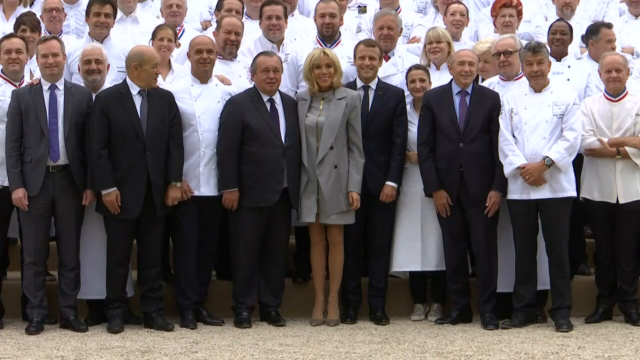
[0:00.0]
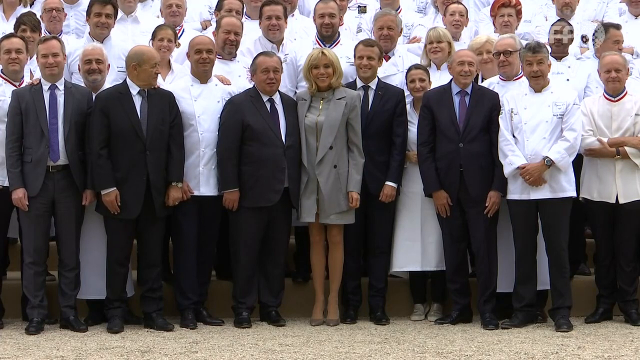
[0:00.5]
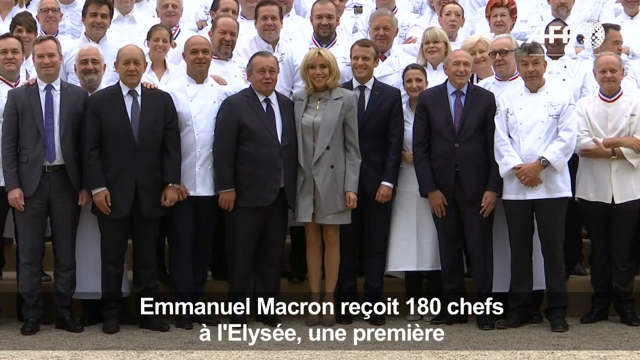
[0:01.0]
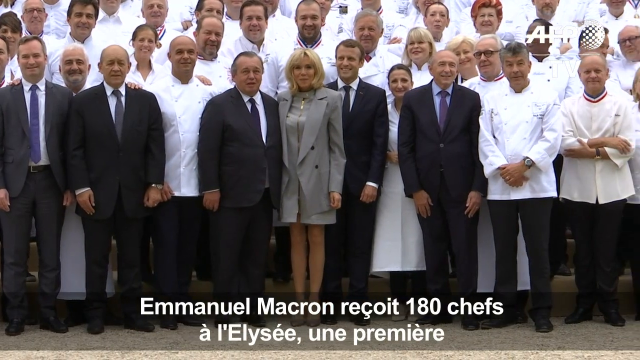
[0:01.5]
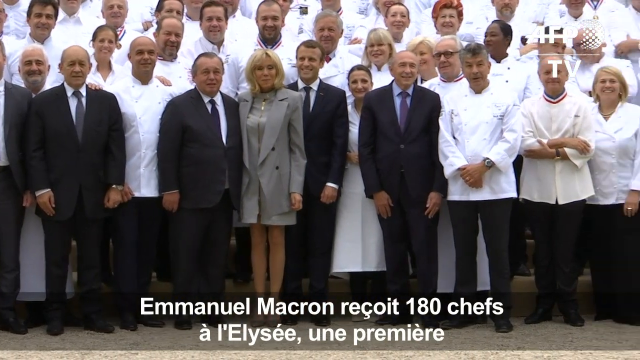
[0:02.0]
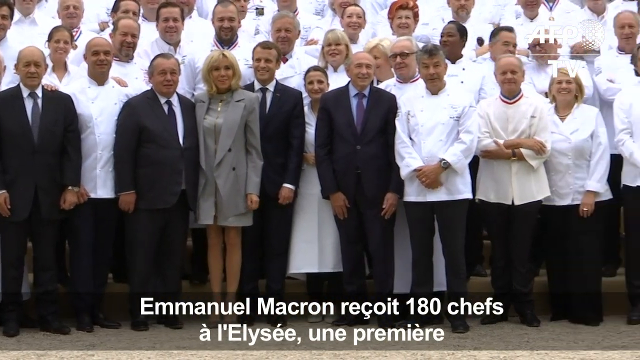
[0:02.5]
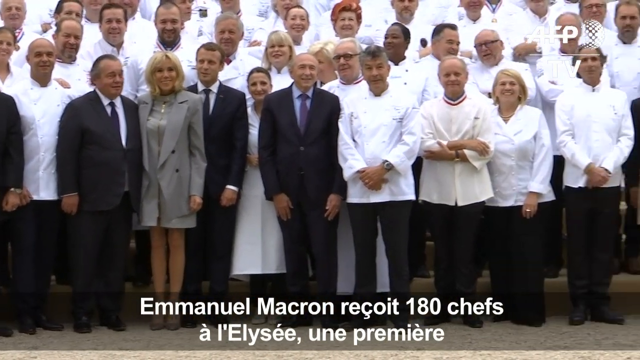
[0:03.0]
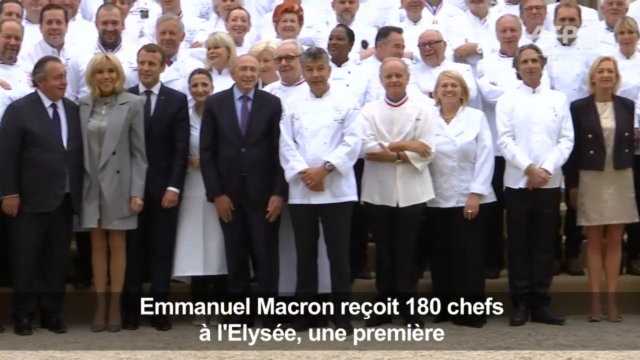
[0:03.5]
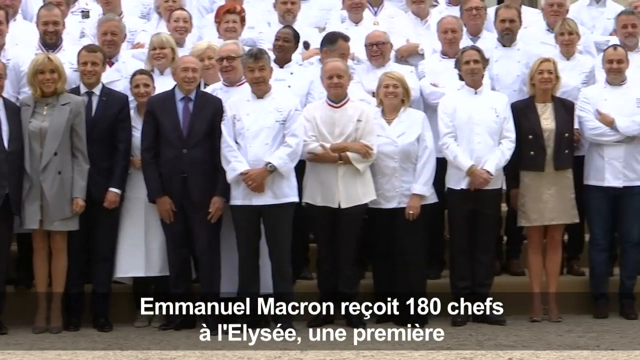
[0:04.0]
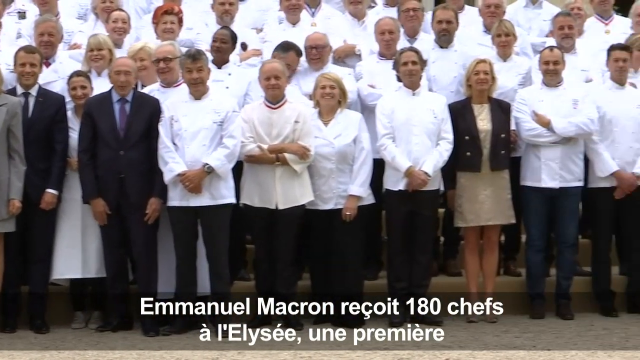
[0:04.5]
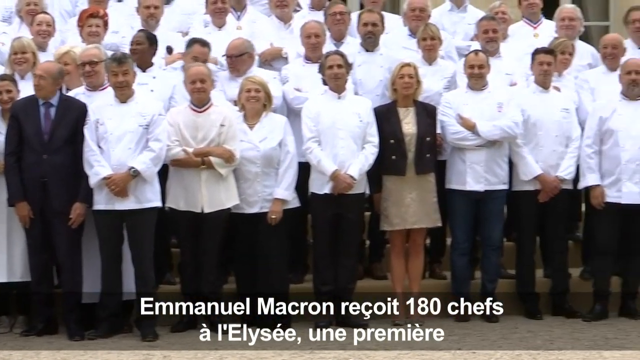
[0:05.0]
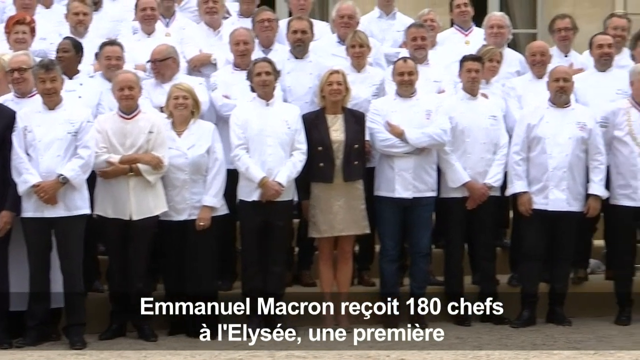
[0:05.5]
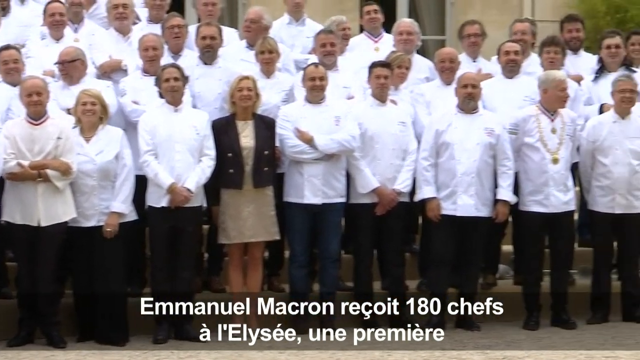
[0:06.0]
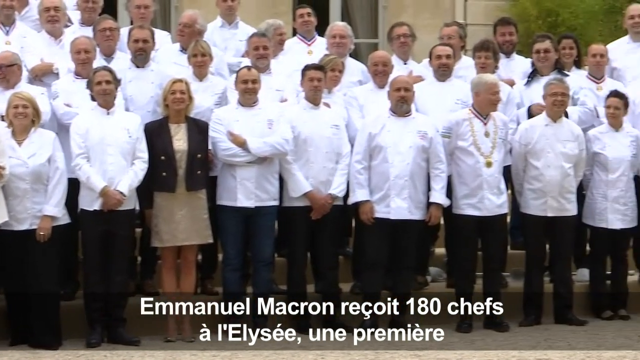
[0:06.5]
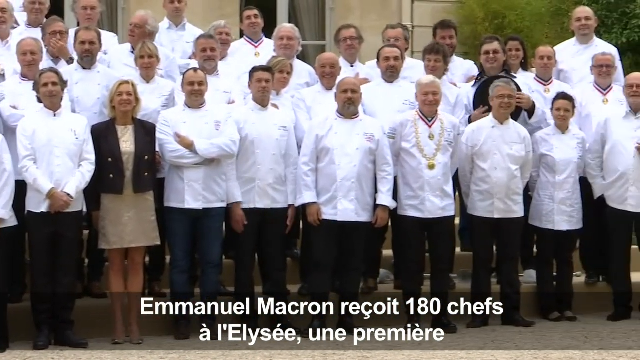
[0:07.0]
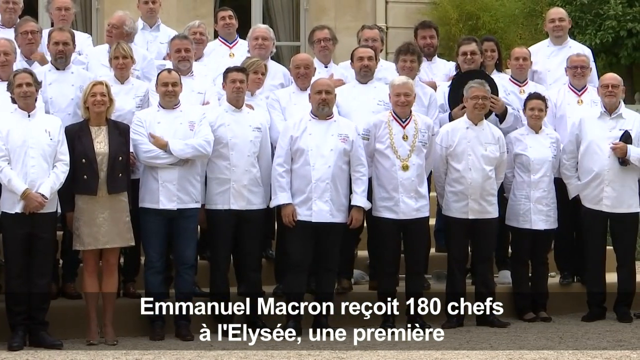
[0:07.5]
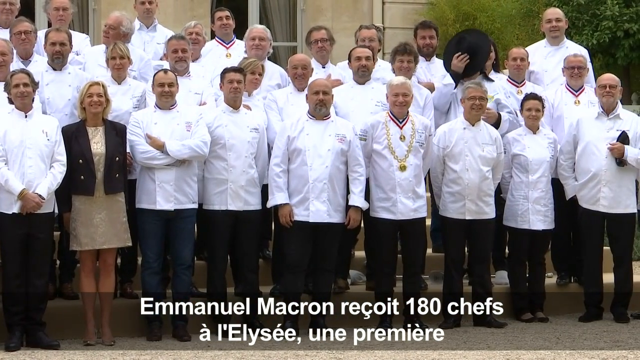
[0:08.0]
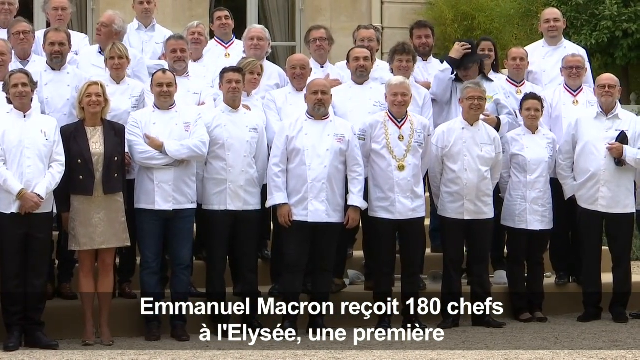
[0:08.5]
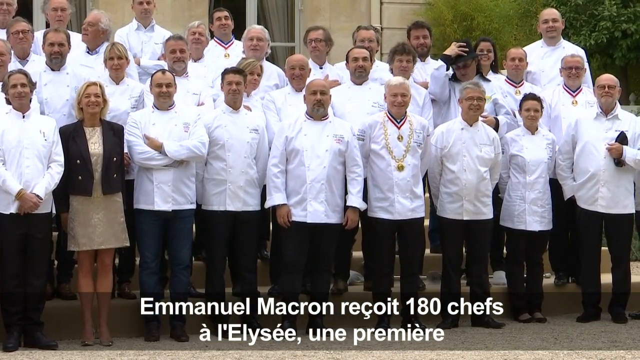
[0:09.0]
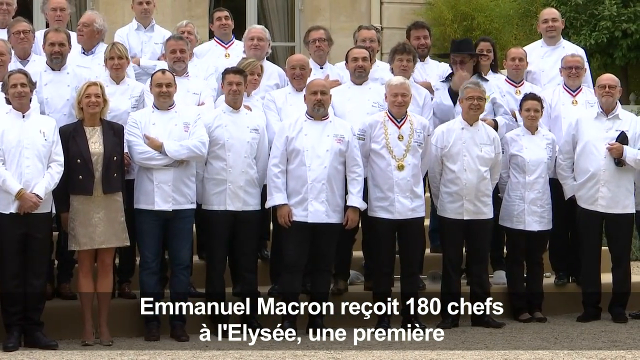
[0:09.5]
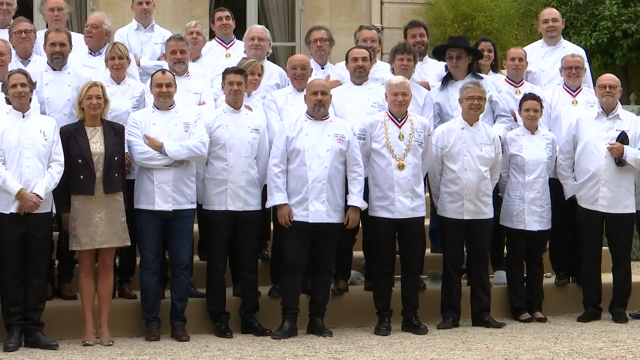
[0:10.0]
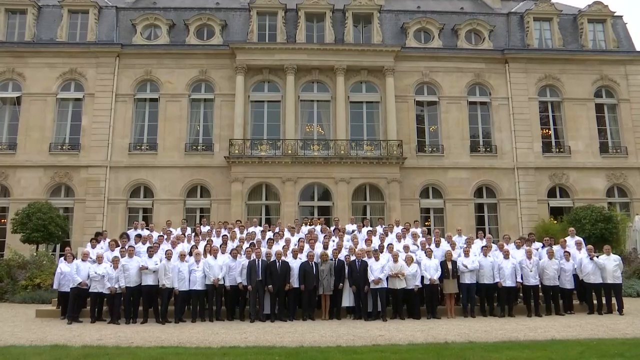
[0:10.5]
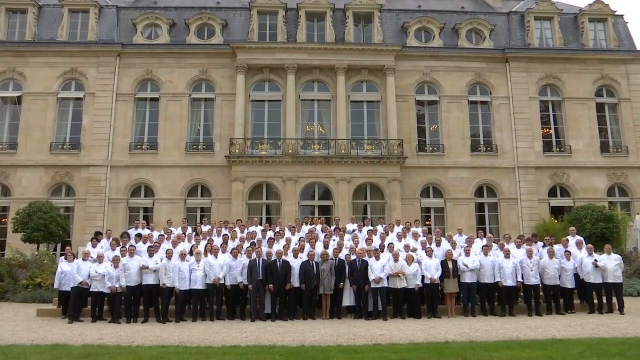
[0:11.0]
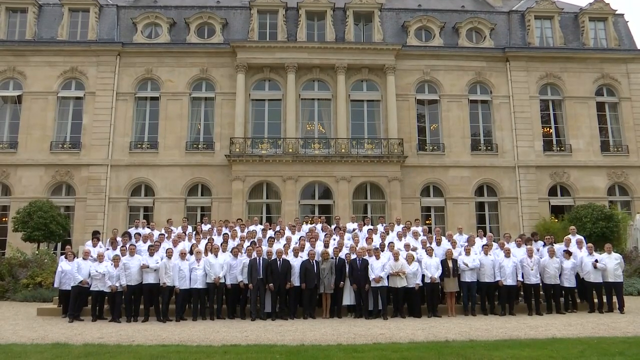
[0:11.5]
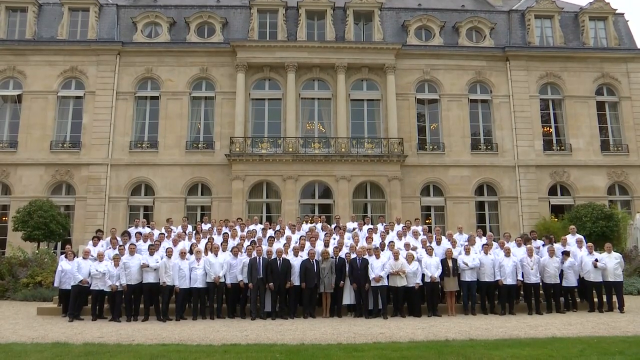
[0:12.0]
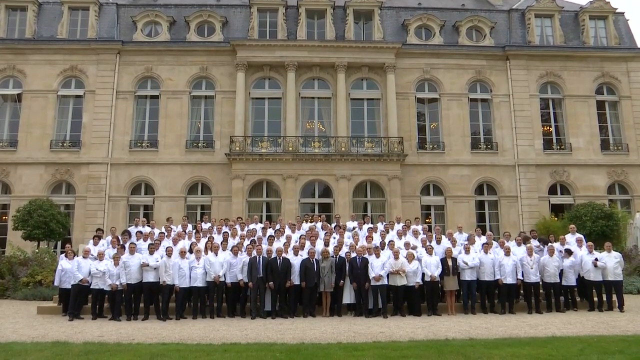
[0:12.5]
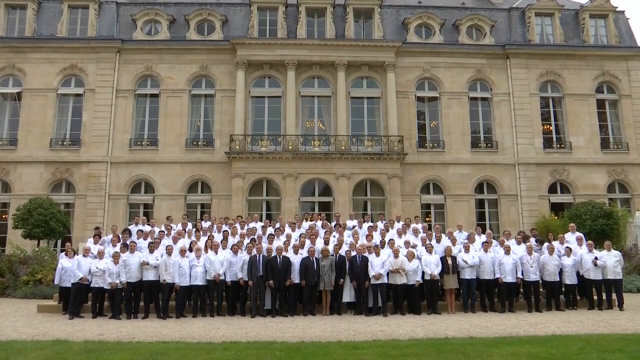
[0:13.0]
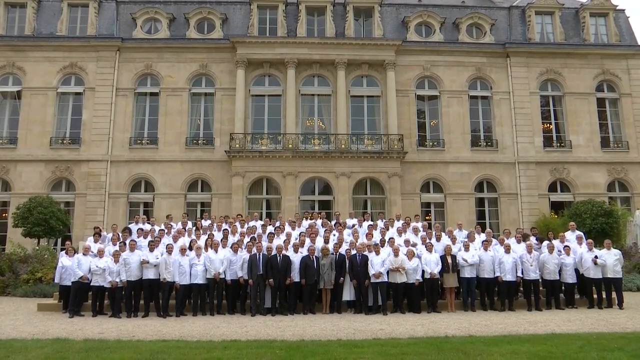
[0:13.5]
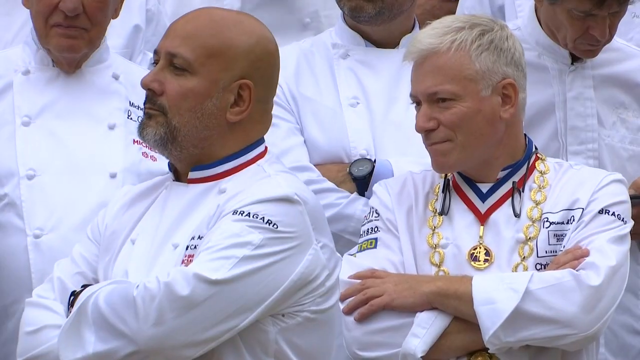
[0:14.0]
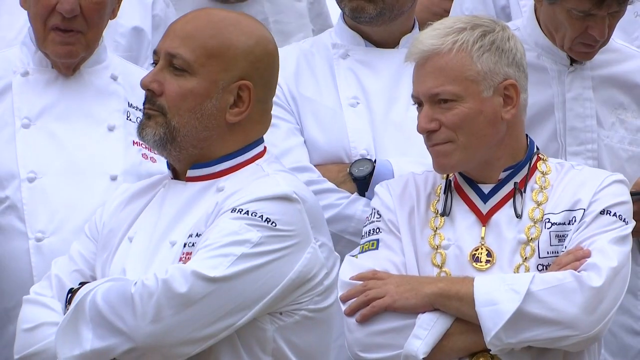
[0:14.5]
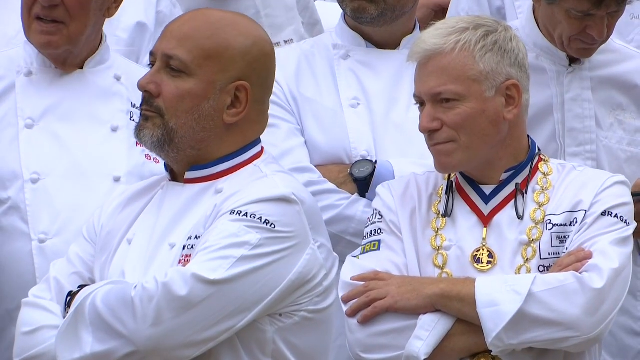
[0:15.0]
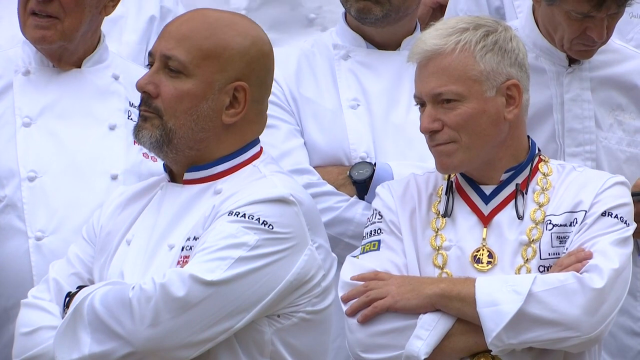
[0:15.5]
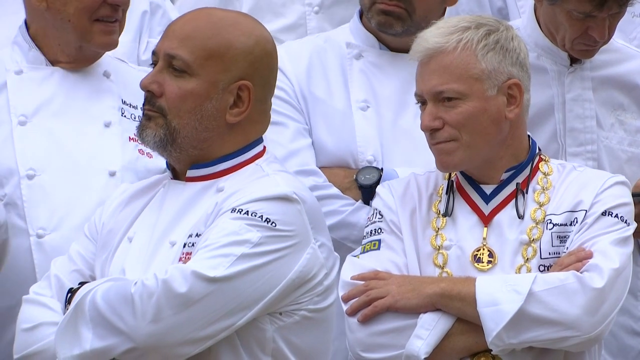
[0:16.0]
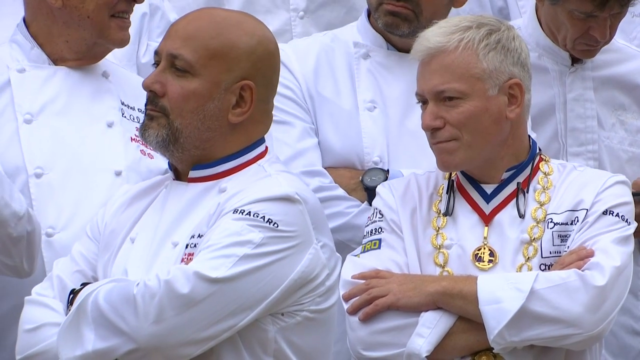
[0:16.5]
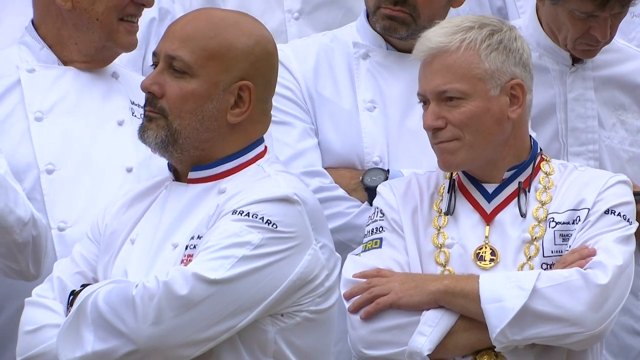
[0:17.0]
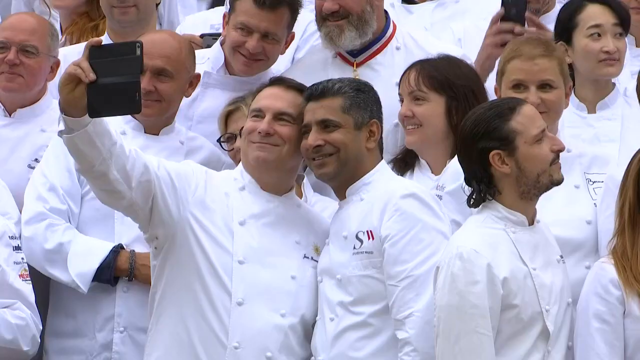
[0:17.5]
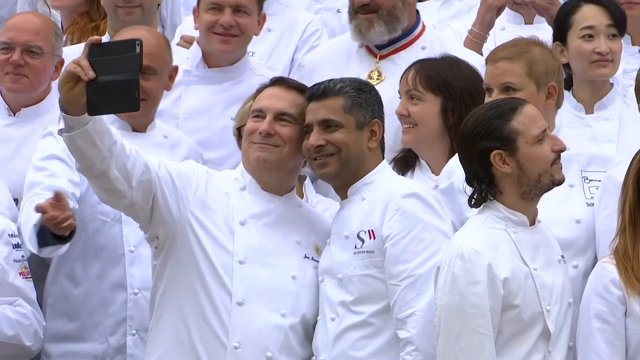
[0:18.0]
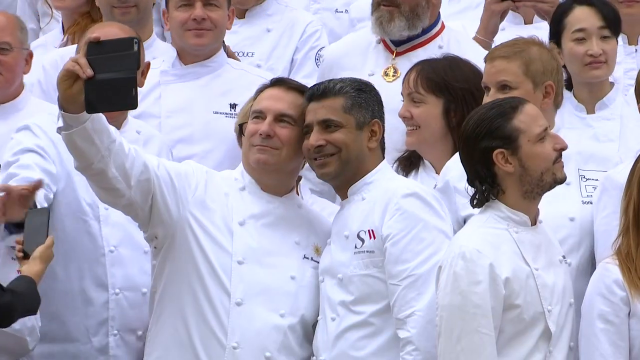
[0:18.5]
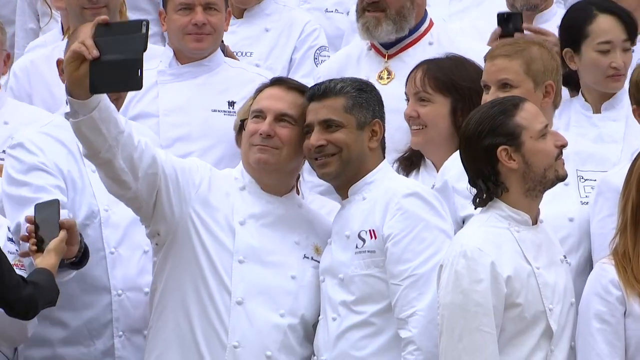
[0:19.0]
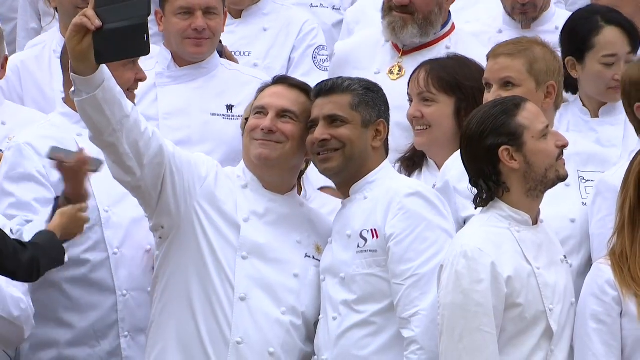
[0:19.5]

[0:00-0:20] A large group of people appears to be posing for a picture in front of a building. In the front are five men dressed up in suit jackets and ties, and in the middle is one woman with blonde hair wearing a gray dress suit. All around and behind them are other people dressed in white, apparently chefs, judging by what they are wearing. On-screen text mentions Emmanuel Macron and 180 chefs. Another dressed-up woman is visible further down the road. One of the chefs puts a hat on. The building is at least three stories tall and very fancy, with chandeliers visible on the second story. Apparently about 180 chefs are all standing together, probably for a photo. A close-up then shows a couple of them: one man is bald with a beard and mustache, and another, with short white, slightly blonde hair, wears possibly a gold chain necklace and a medal. Both men have their arms crossed. A group of them then takes a selfie together, and more photos are taken.